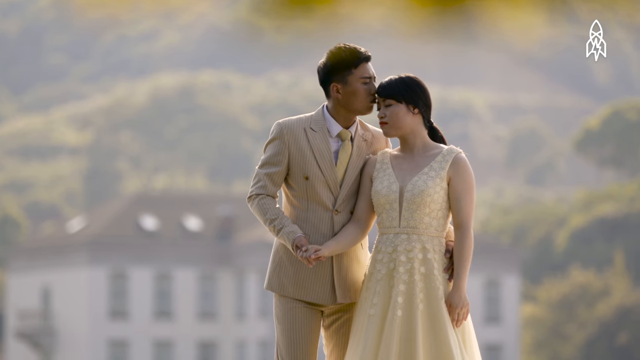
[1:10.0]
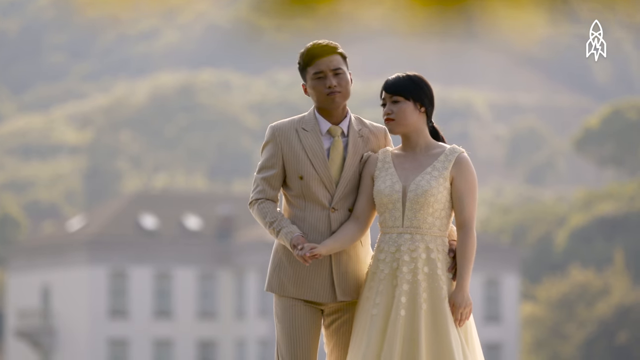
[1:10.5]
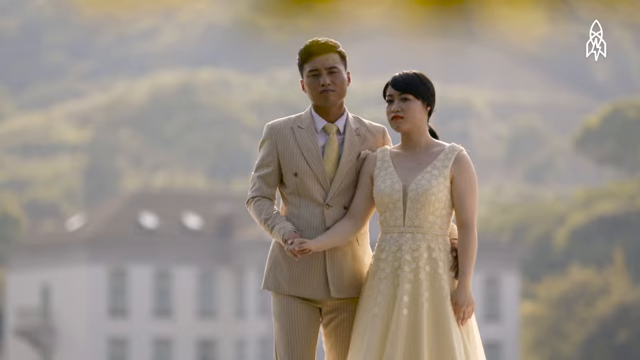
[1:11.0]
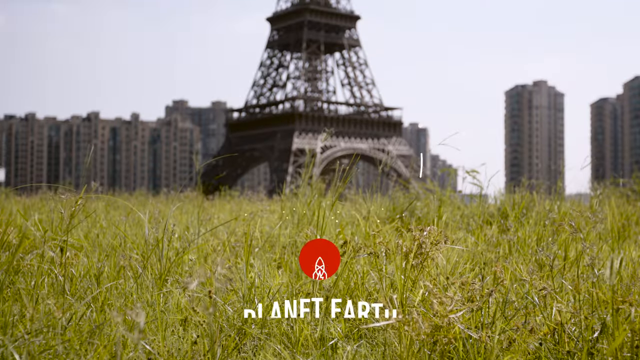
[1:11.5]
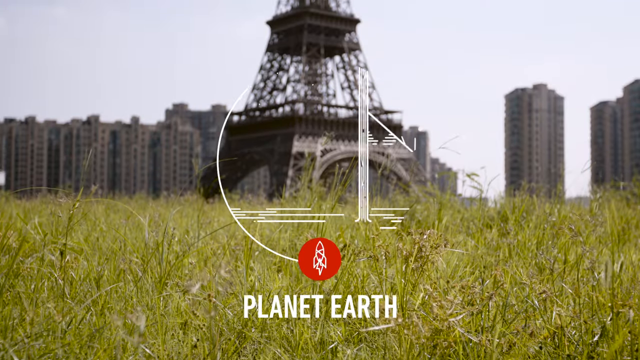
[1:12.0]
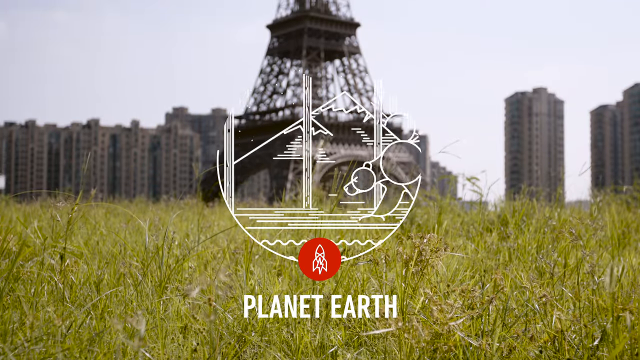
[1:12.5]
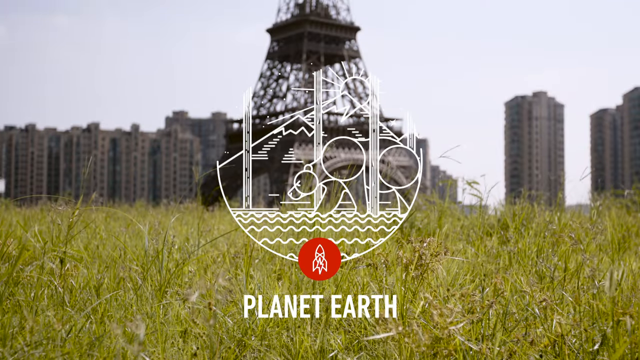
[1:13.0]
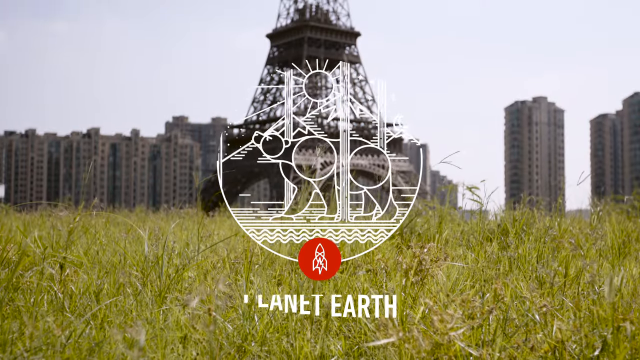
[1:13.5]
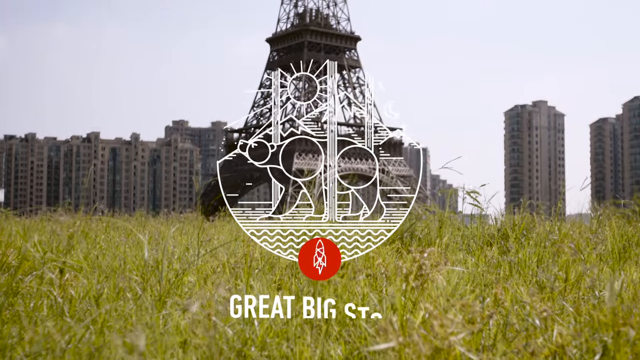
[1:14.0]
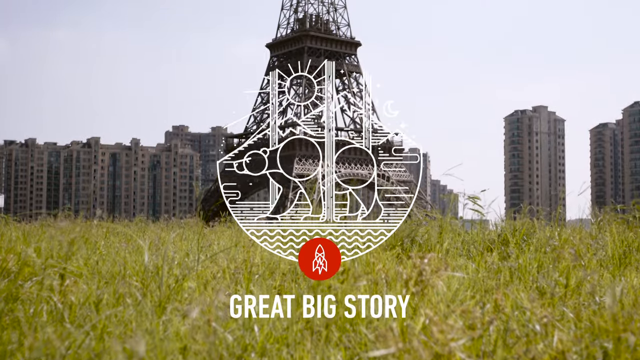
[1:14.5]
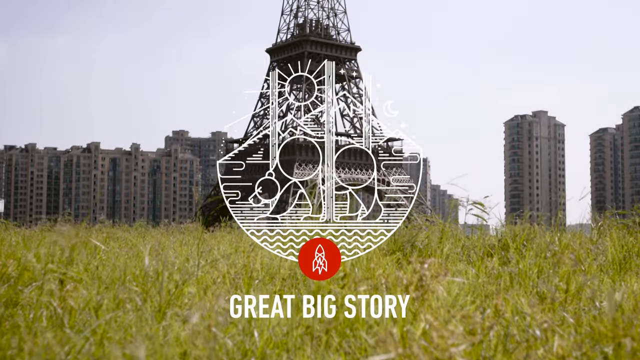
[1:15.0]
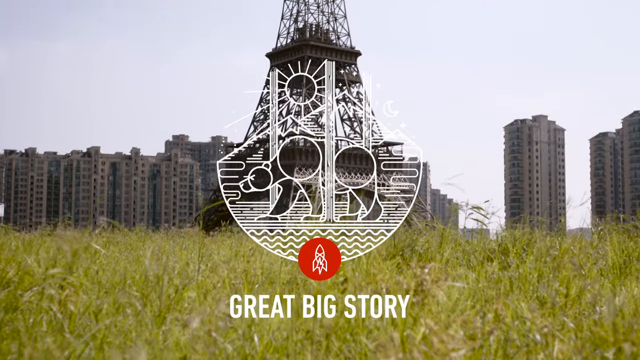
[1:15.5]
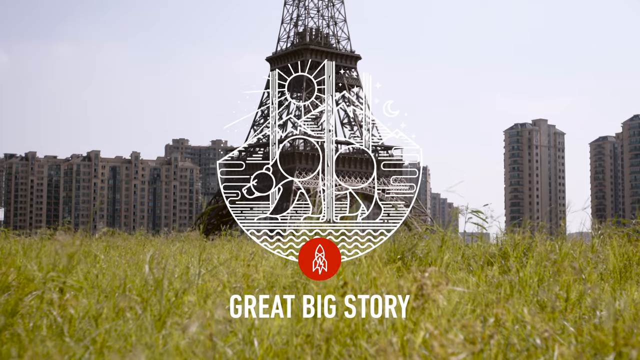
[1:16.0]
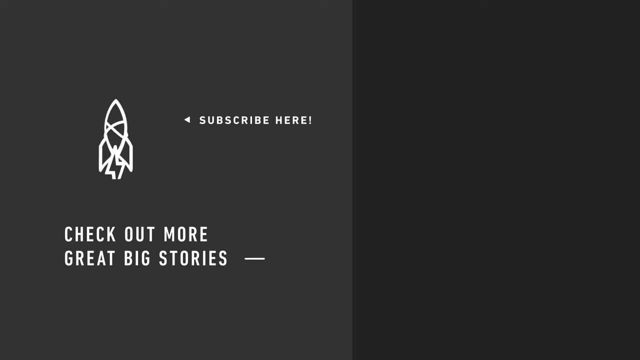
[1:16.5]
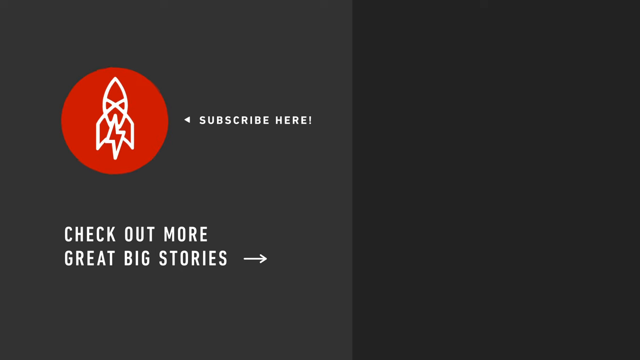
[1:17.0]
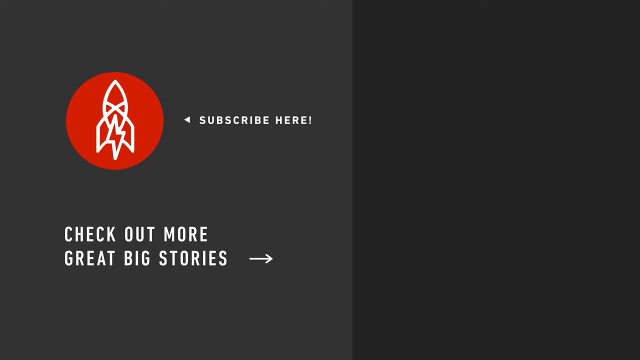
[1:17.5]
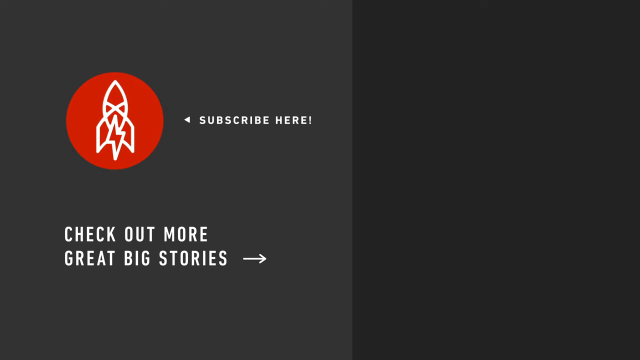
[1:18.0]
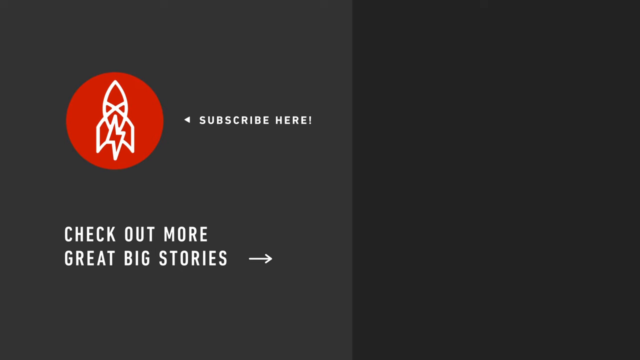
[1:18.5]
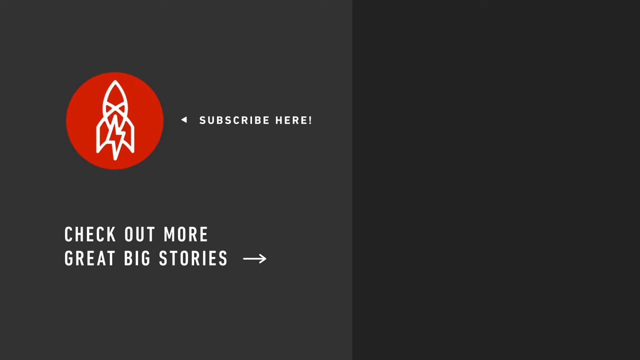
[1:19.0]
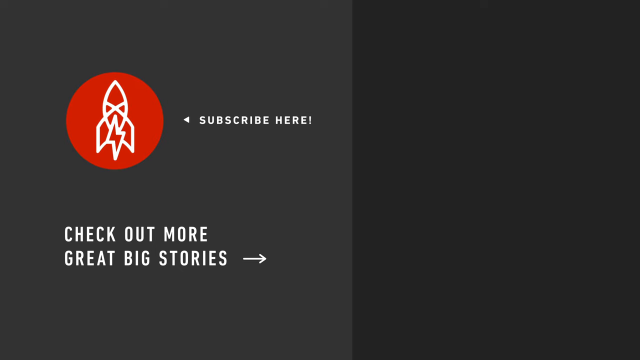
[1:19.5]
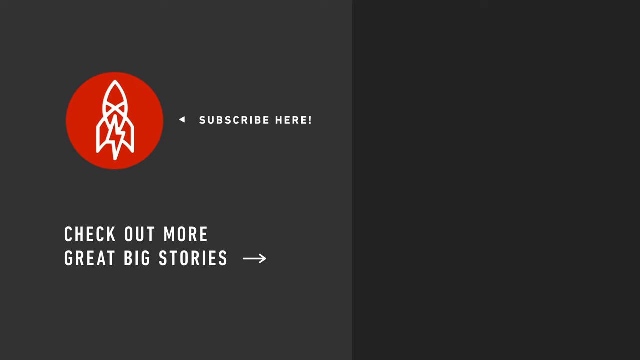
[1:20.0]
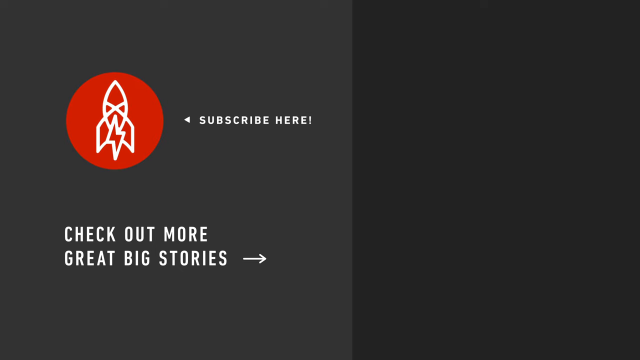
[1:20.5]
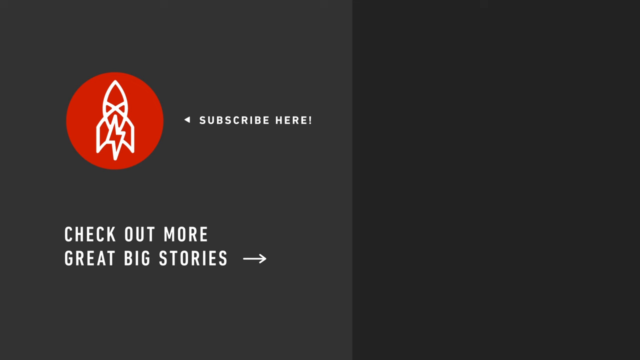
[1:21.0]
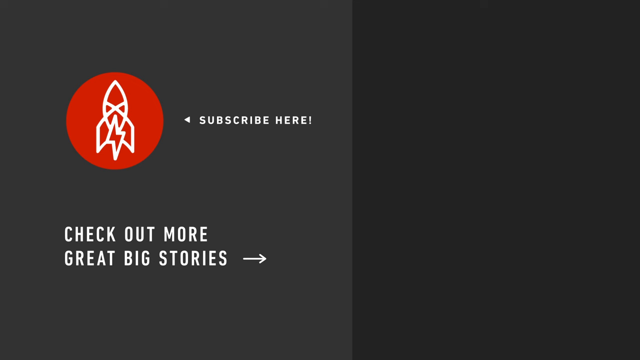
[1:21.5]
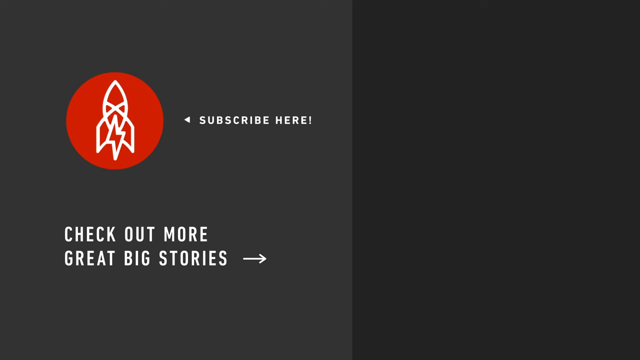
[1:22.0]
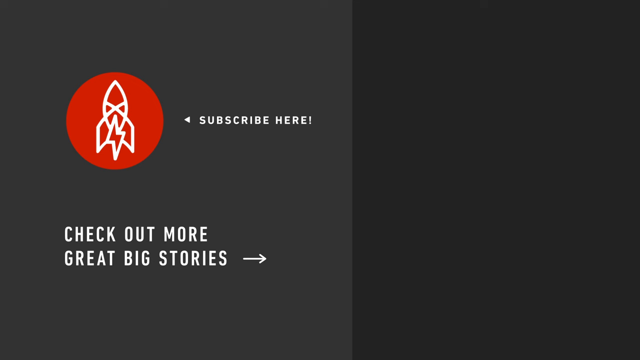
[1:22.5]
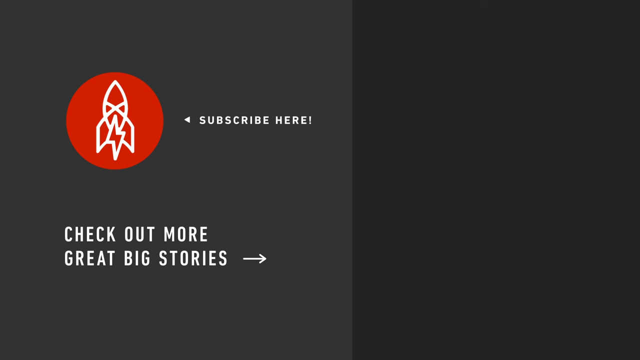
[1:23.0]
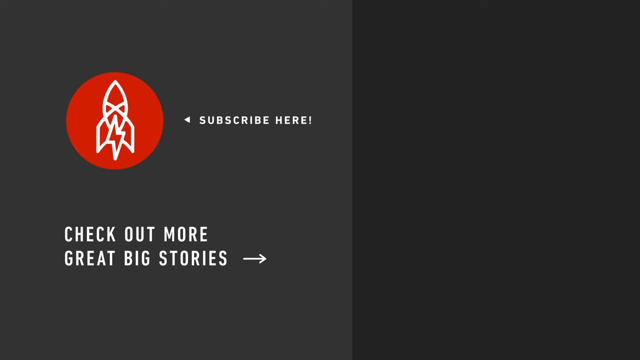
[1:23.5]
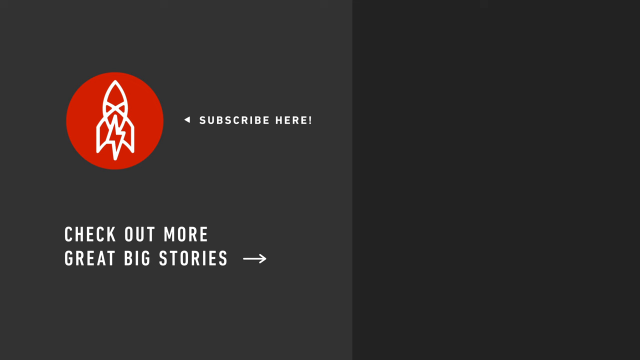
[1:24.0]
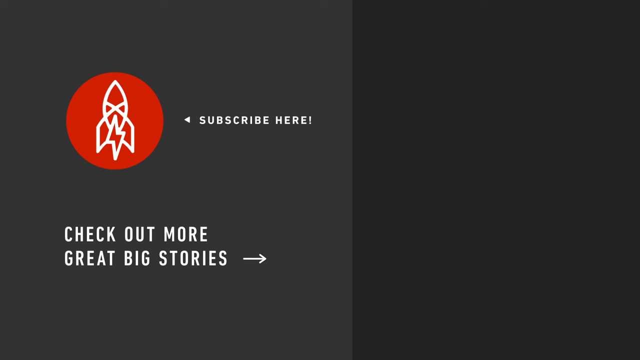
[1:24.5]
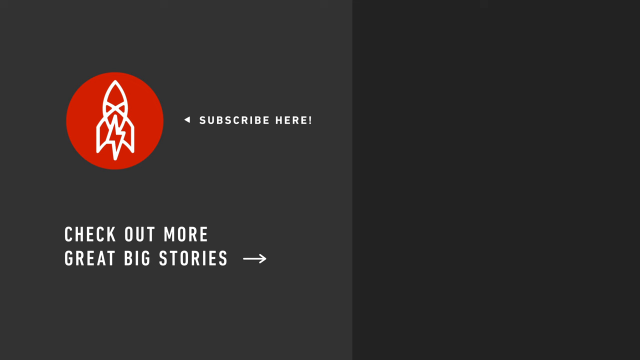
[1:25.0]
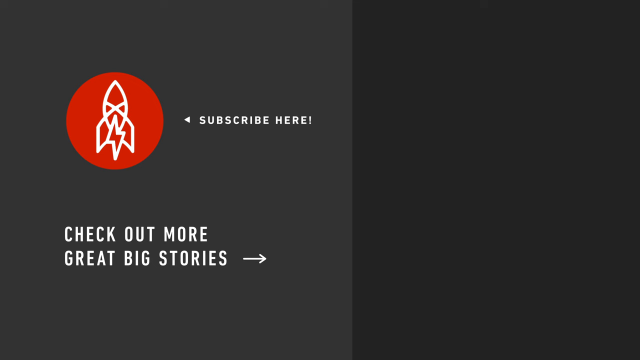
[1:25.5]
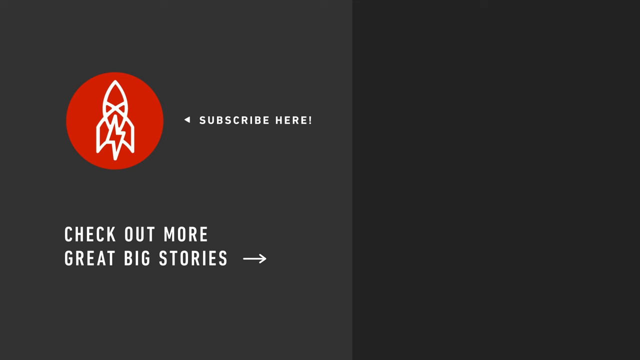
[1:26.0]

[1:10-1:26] A watermark reads "great big story". The last shot shows the second couple standing up on the hill with the replica Eiffel Tower far off in the background behind them. They wear matching wedding clothes of a kind of tannish gold color: the man in a suit and tie and the woman in a long, modest dress. They hold hands and look at the camera. Right after that, text reads "planet Earth great big story", along with a watermark of a bear.